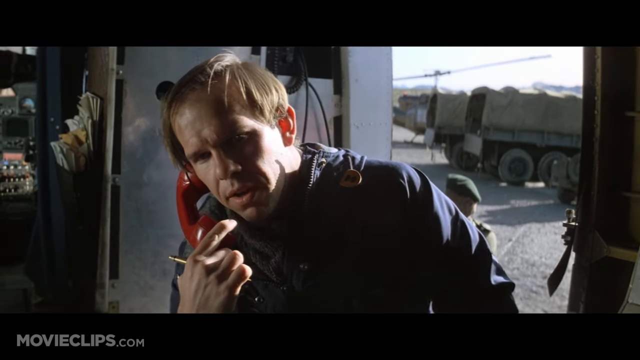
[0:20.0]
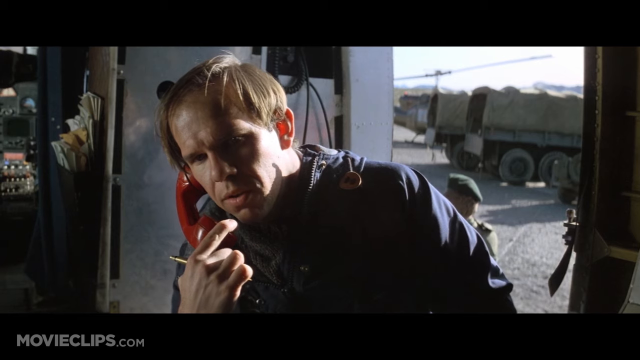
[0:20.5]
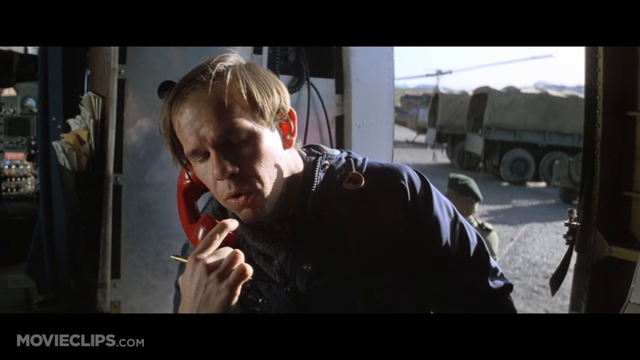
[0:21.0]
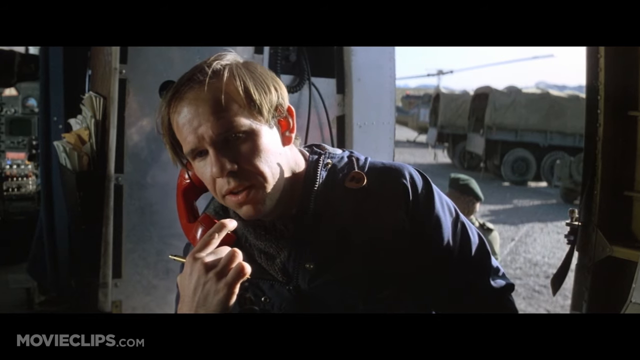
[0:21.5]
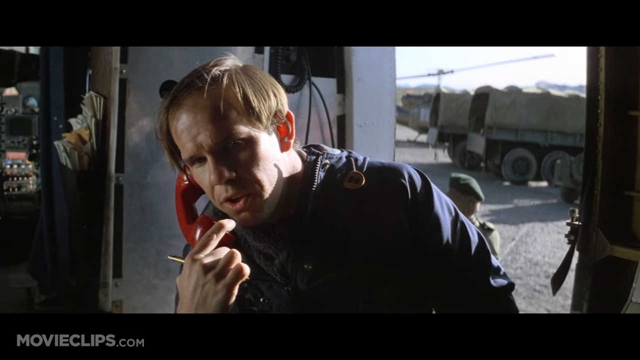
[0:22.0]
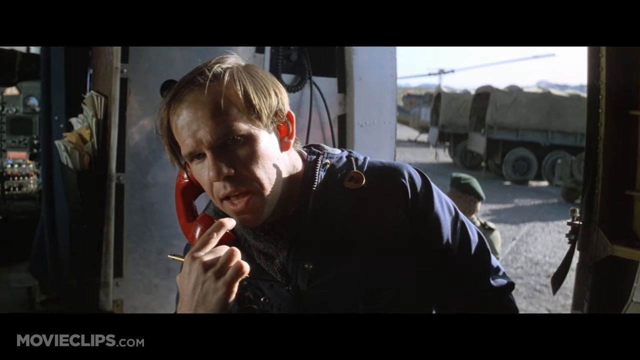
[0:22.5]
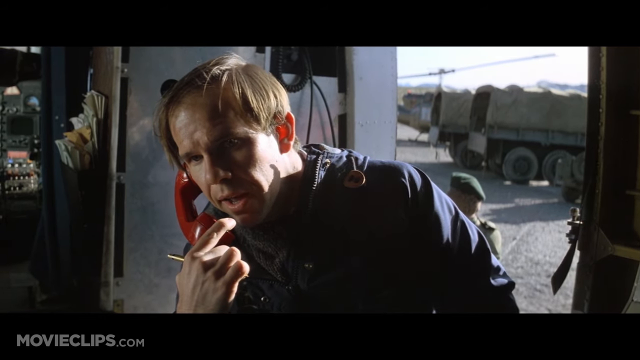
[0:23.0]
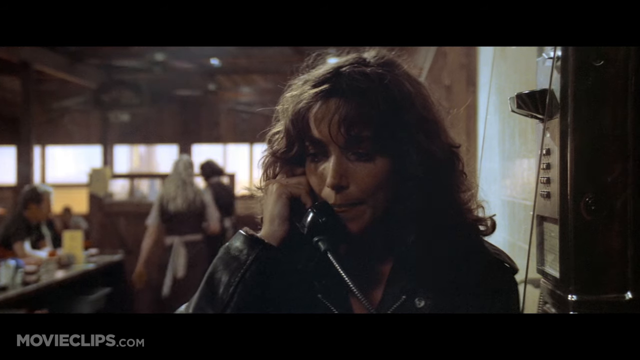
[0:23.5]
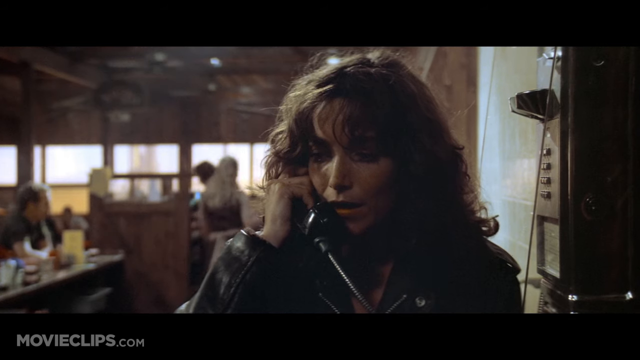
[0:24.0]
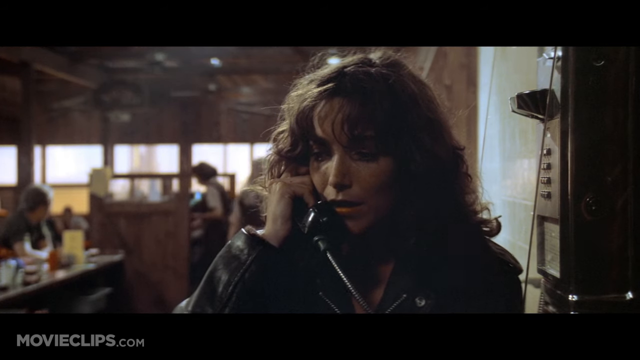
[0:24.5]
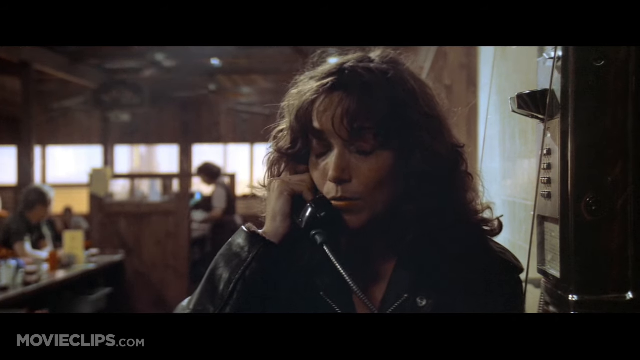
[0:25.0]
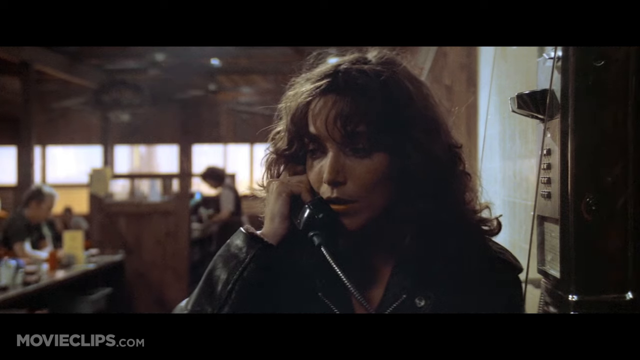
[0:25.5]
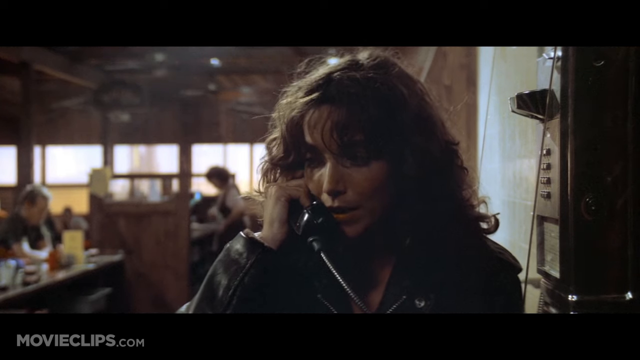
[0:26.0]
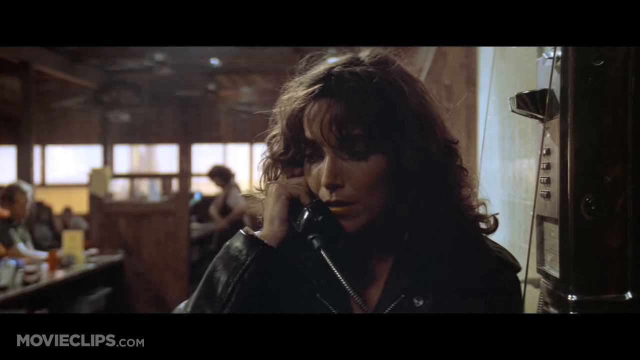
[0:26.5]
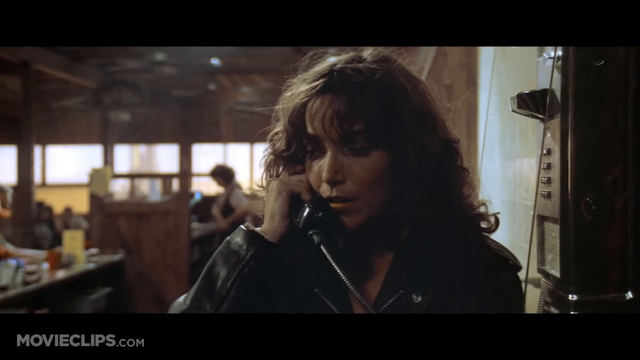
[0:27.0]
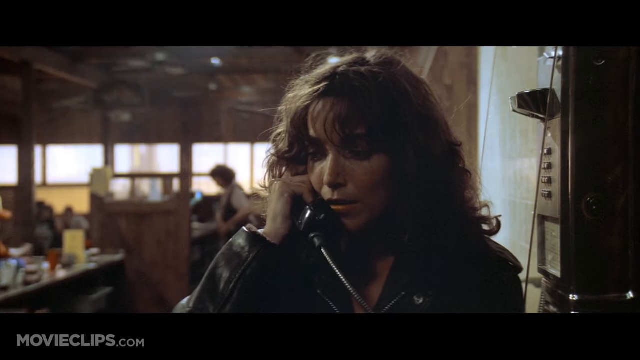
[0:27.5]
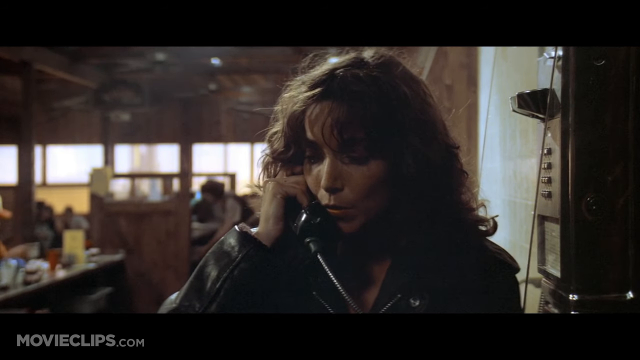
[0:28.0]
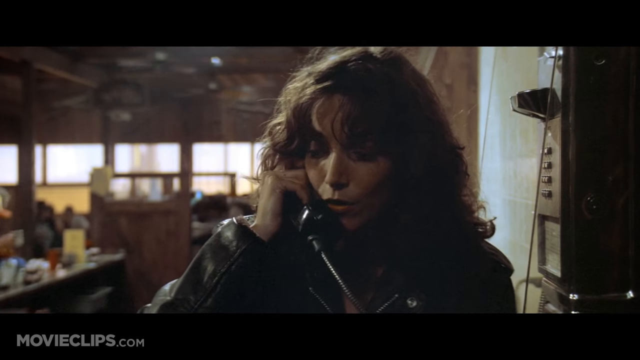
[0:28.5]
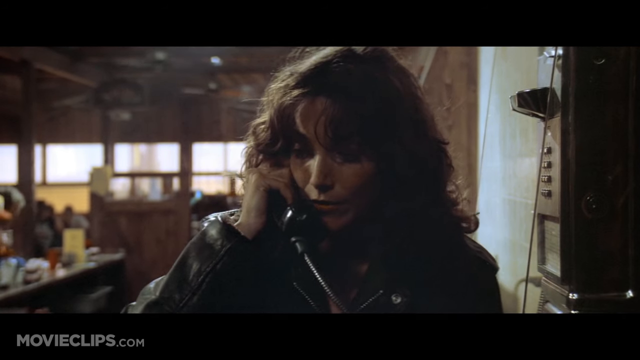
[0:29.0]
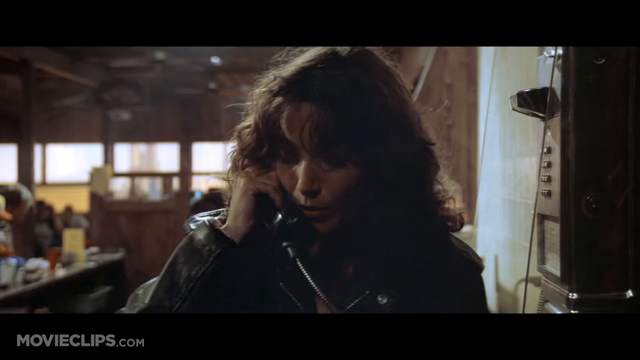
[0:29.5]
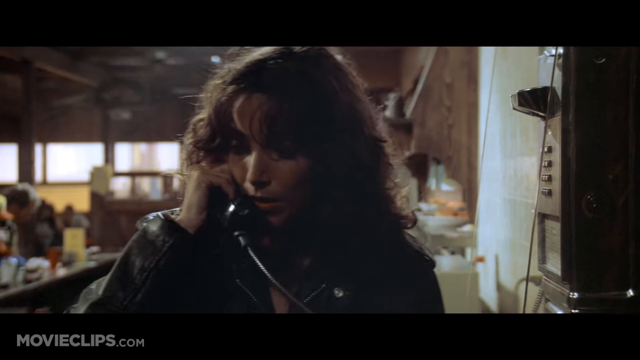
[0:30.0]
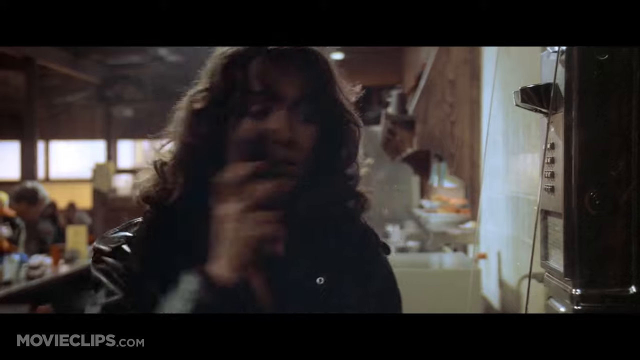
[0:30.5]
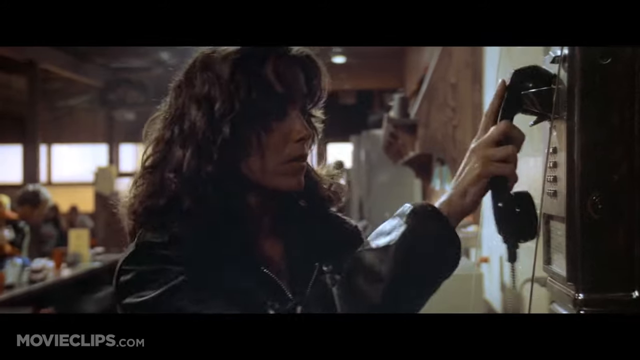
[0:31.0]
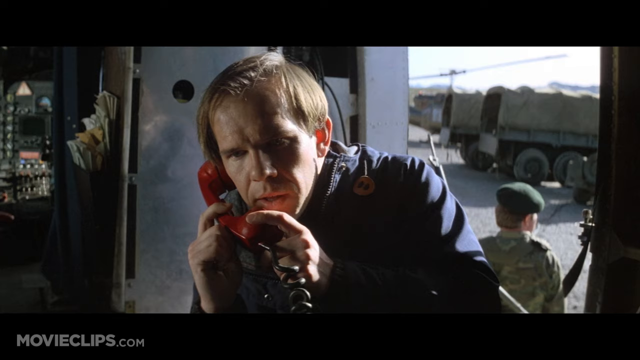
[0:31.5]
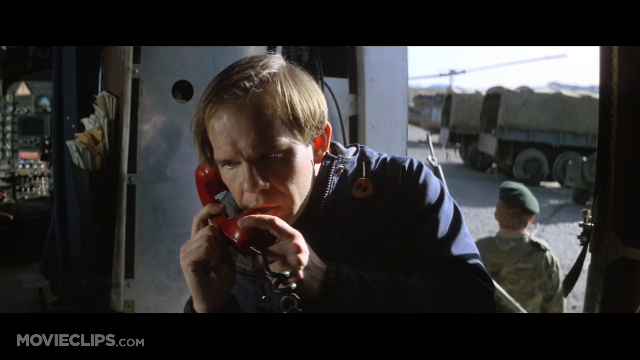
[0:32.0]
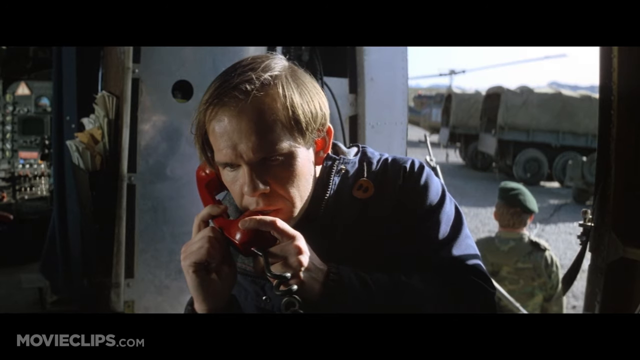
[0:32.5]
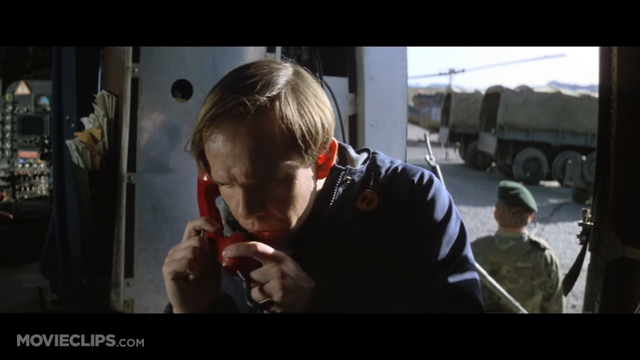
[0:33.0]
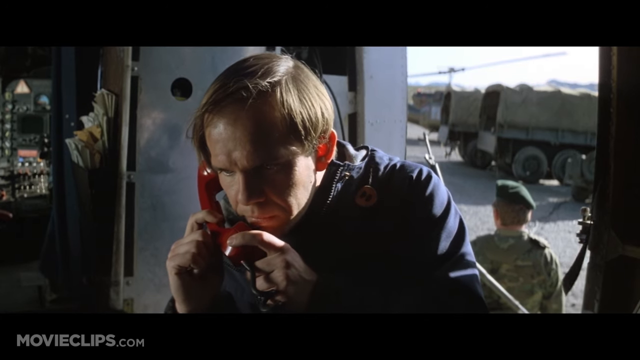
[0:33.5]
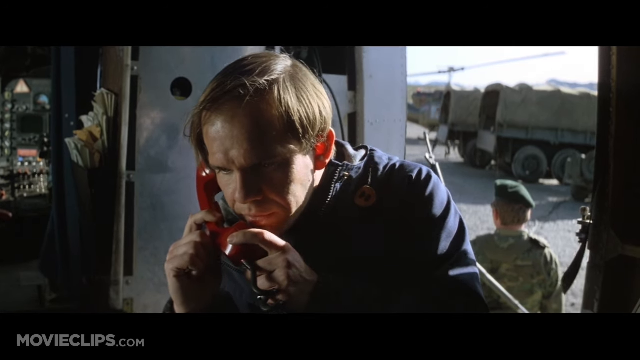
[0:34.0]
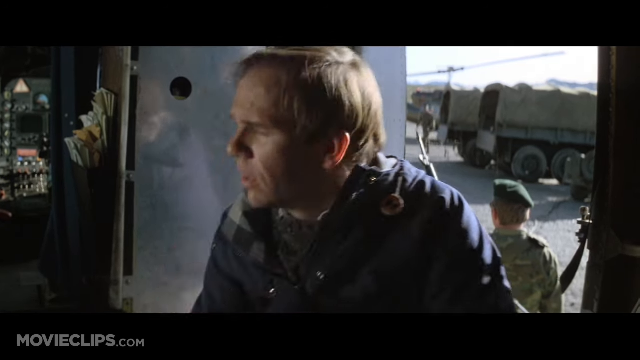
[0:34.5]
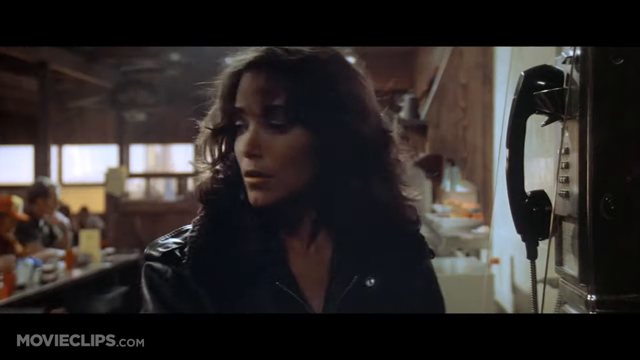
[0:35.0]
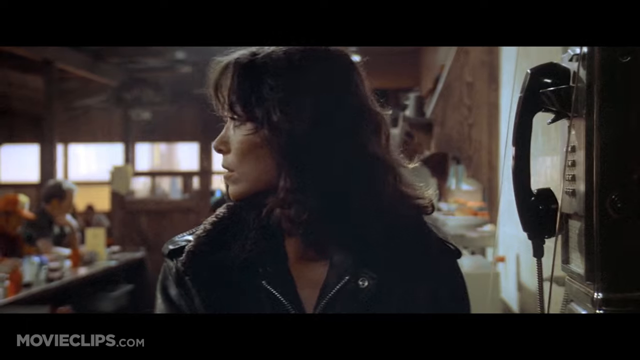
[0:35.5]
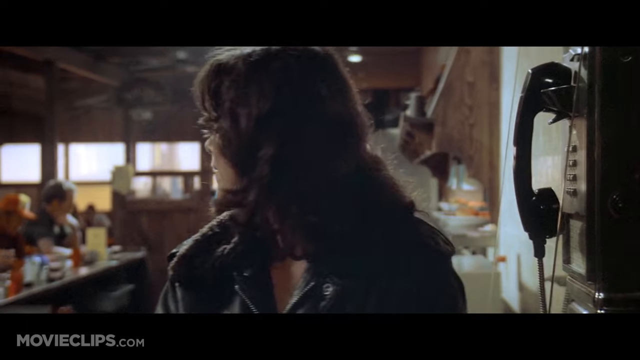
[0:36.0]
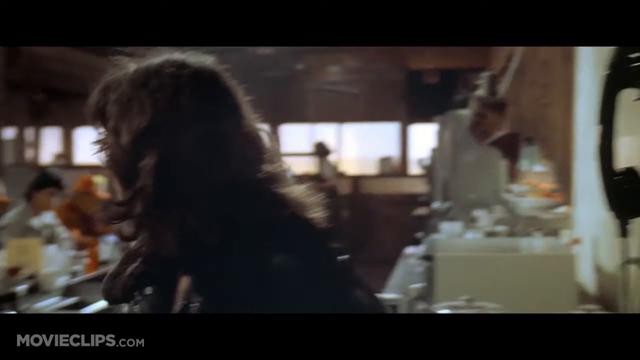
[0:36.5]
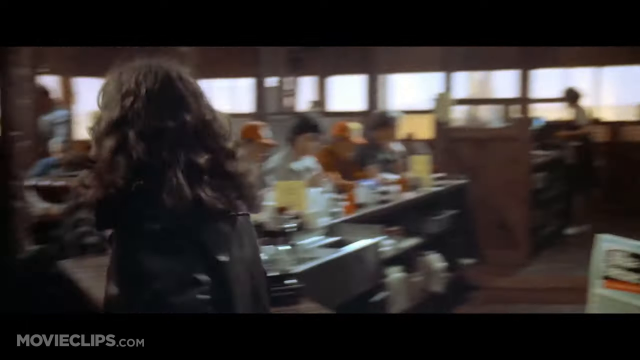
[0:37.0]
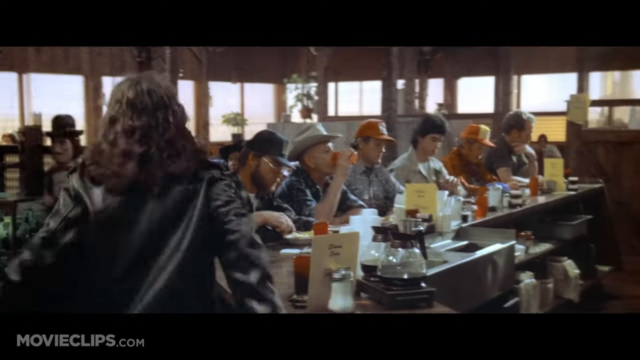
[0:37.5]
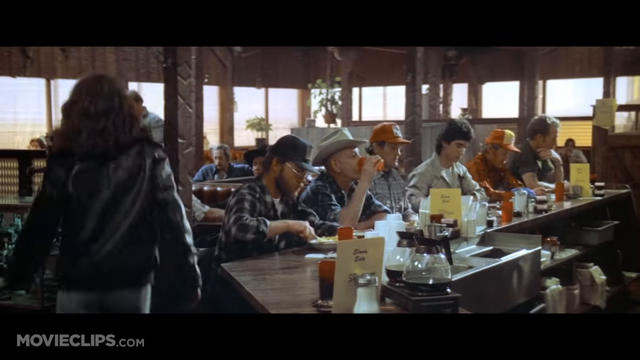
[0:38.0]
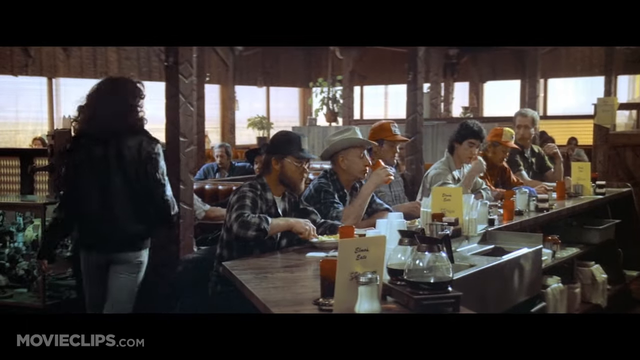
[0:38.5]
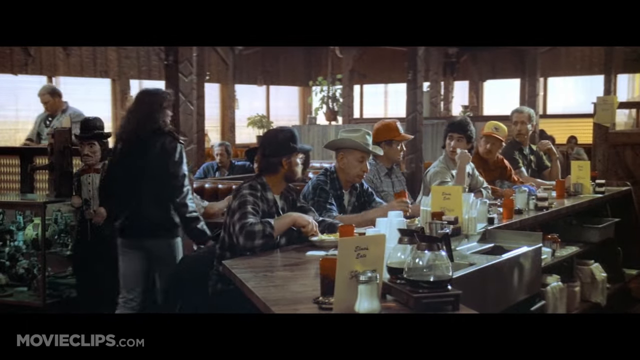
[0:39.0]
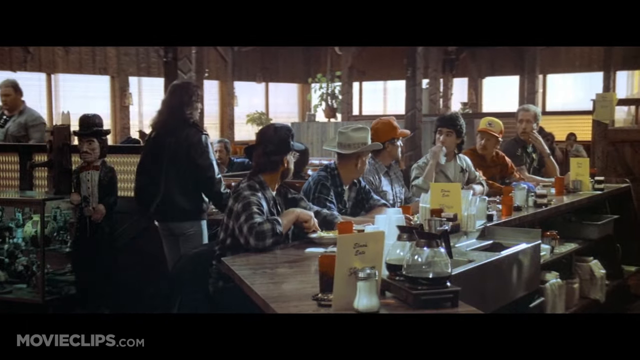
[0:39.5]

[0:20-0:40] The man appears to be at an army location, judging by his background, where apparently one soldier is also visible; he may work at an army facility or may be a soldier himself. The woman talking to him looks young, possibly between 30 and 40 years old, with scattered, not-too-long, slightly curly hair. She quickly walks away as if unhappy, and the way she puts the phone down makes it look like they were quarreling or disagreeing about something. Many people are in the restaurant the woman called from; some of the men wear cowboy hats and sit around a table having drinks.